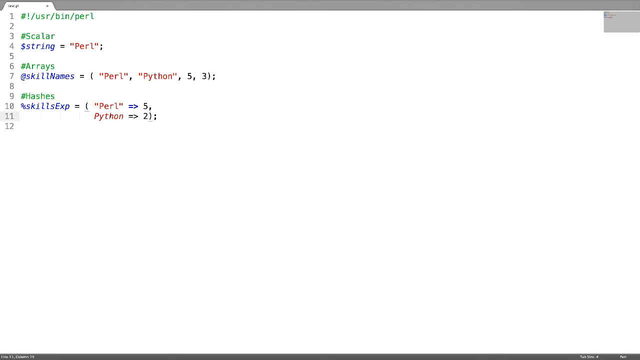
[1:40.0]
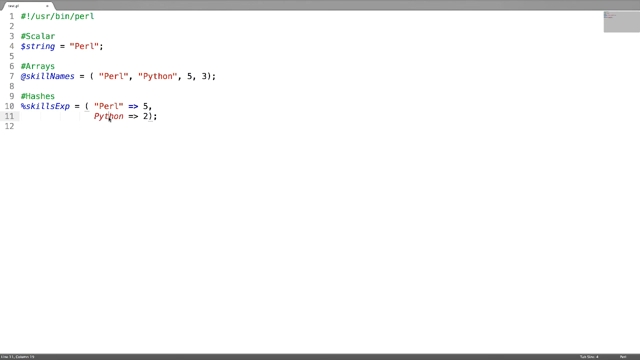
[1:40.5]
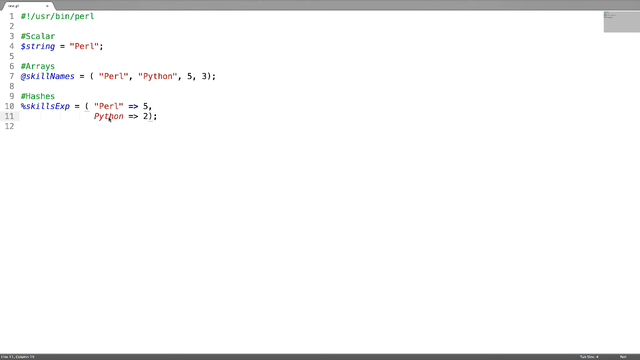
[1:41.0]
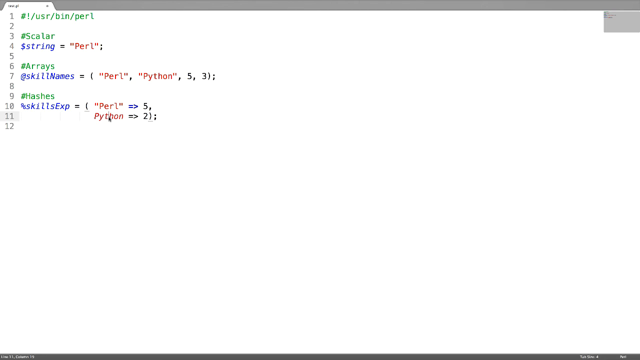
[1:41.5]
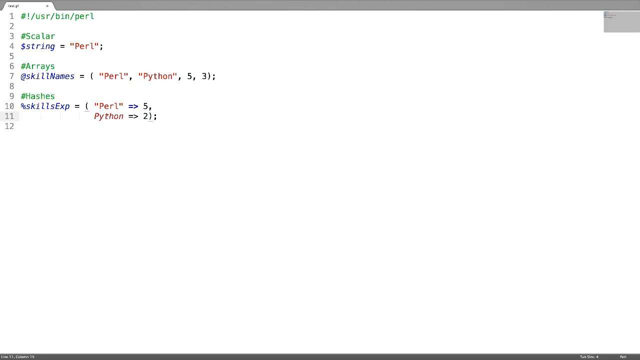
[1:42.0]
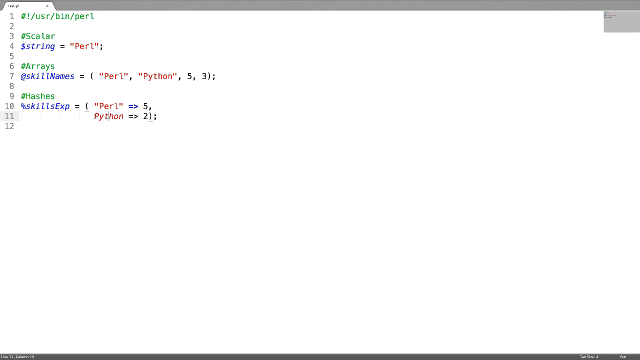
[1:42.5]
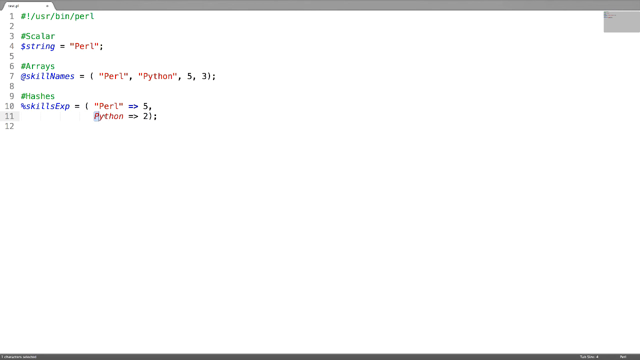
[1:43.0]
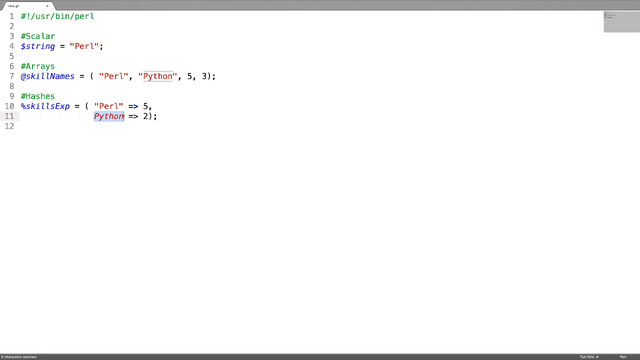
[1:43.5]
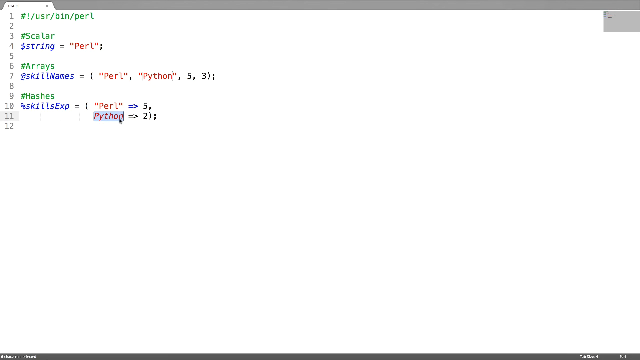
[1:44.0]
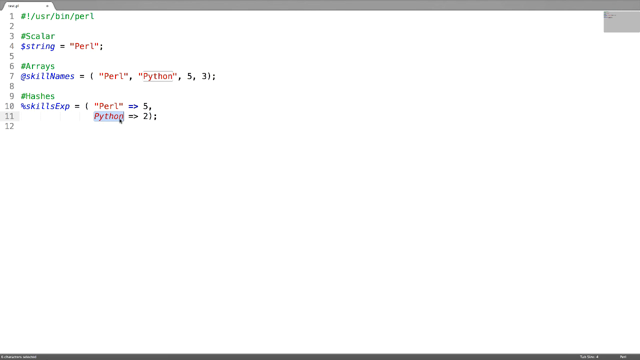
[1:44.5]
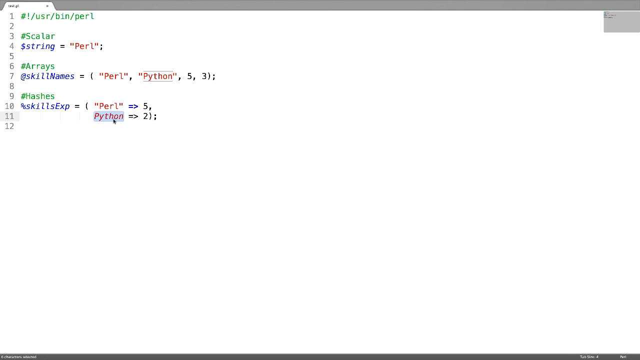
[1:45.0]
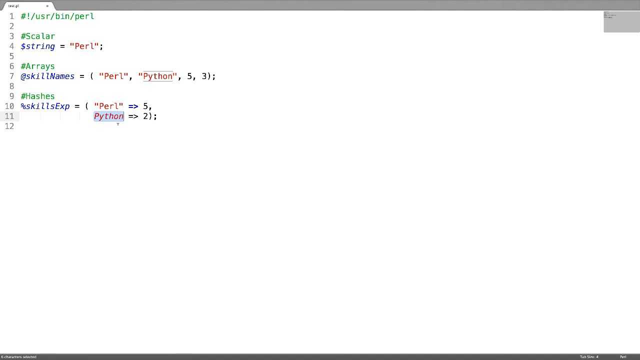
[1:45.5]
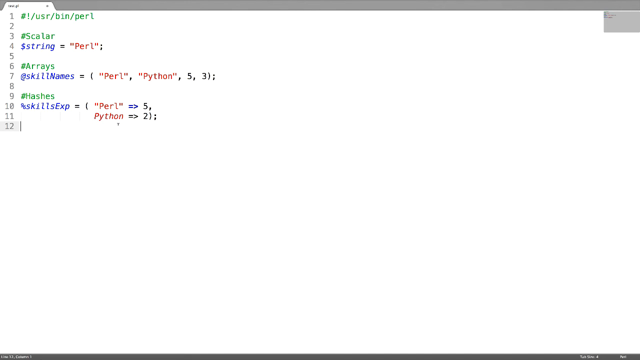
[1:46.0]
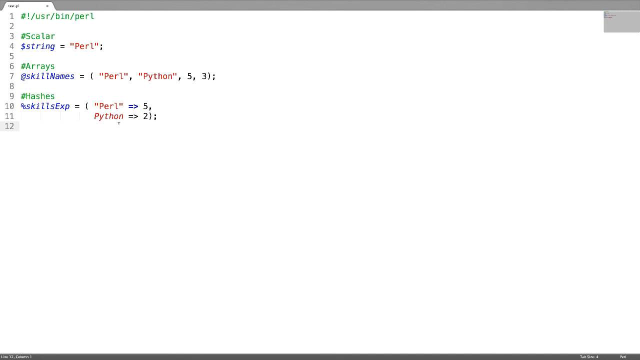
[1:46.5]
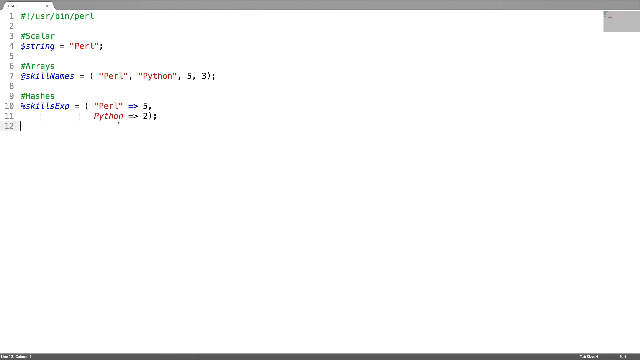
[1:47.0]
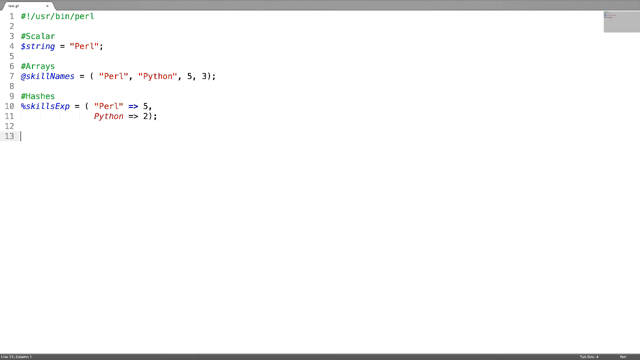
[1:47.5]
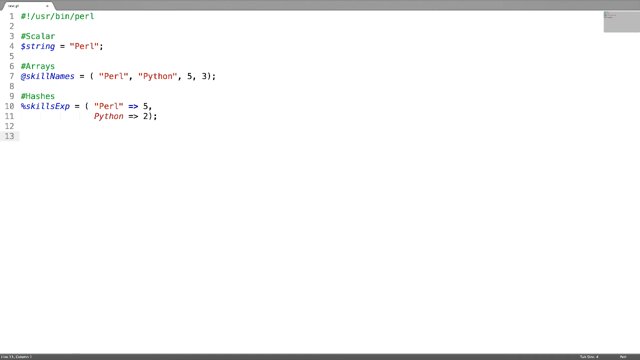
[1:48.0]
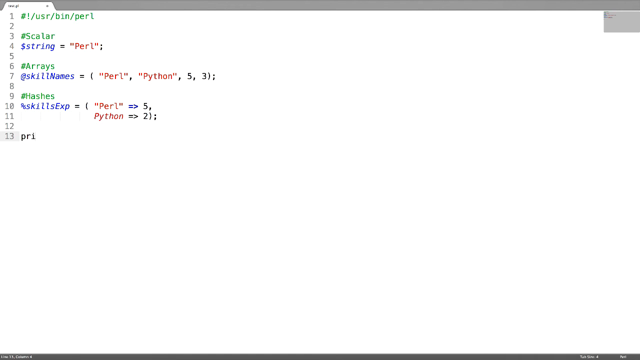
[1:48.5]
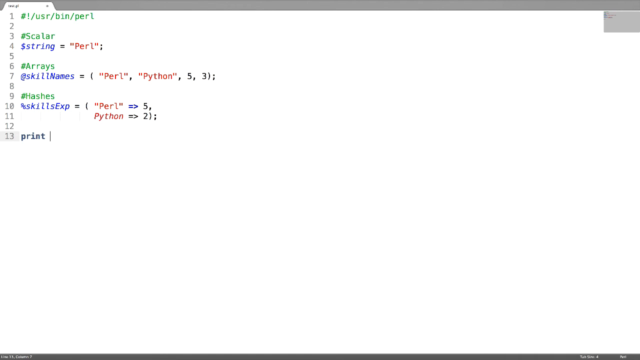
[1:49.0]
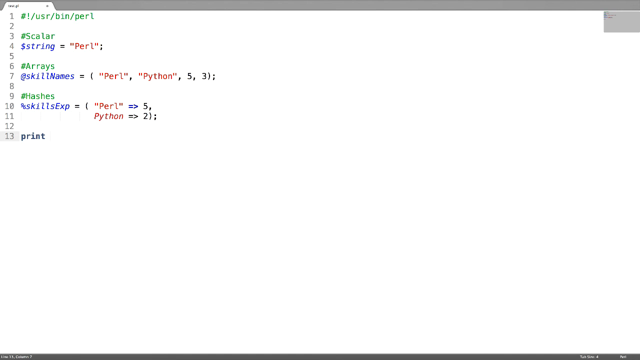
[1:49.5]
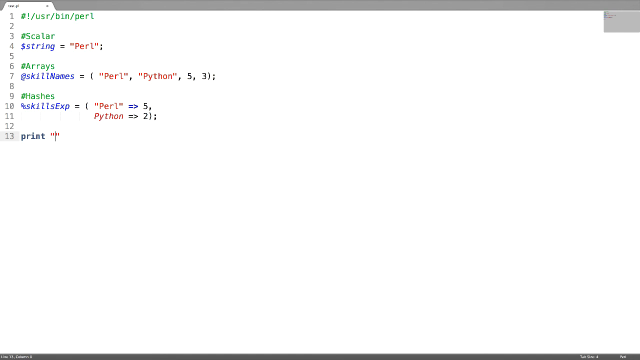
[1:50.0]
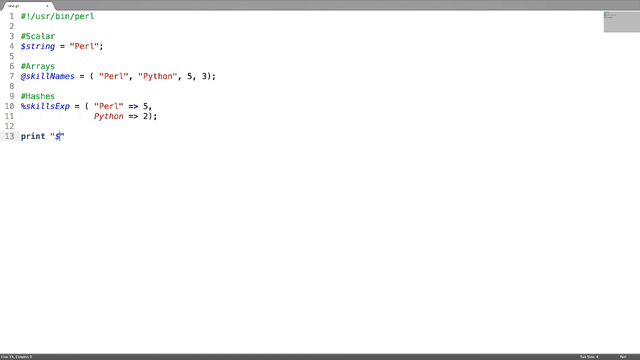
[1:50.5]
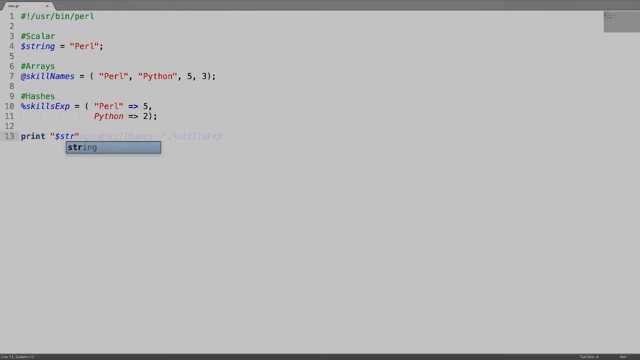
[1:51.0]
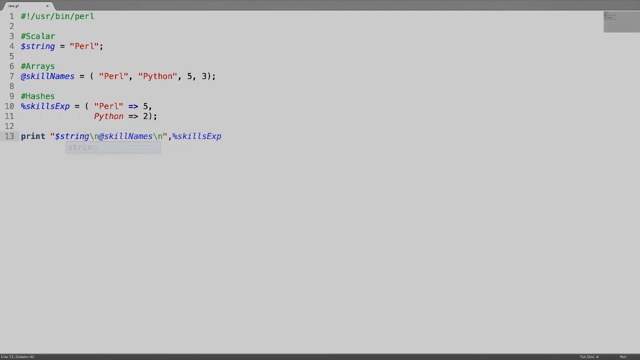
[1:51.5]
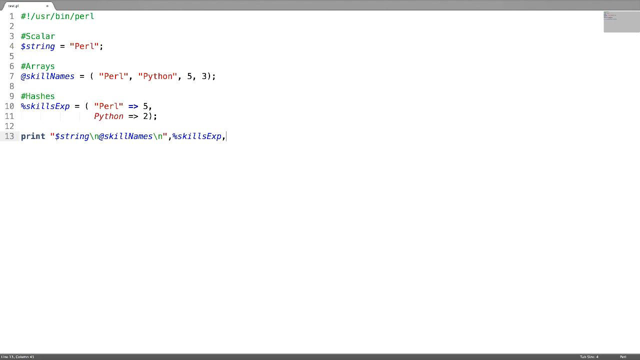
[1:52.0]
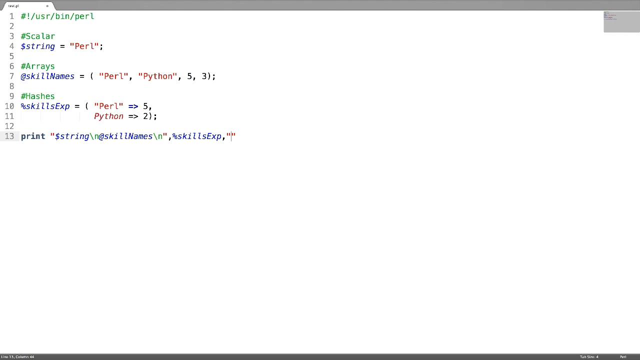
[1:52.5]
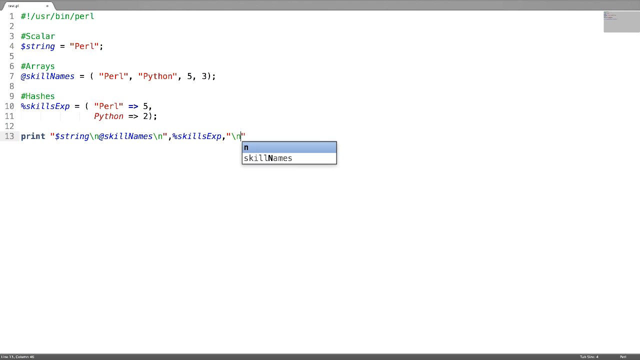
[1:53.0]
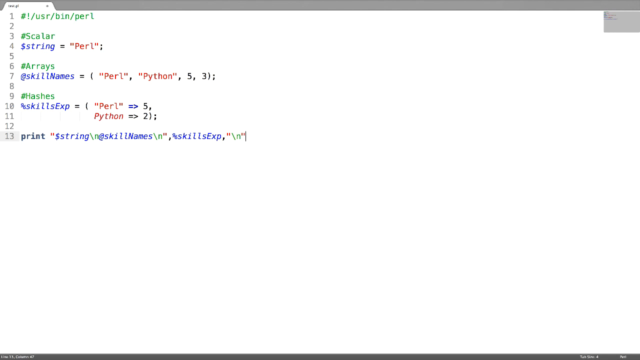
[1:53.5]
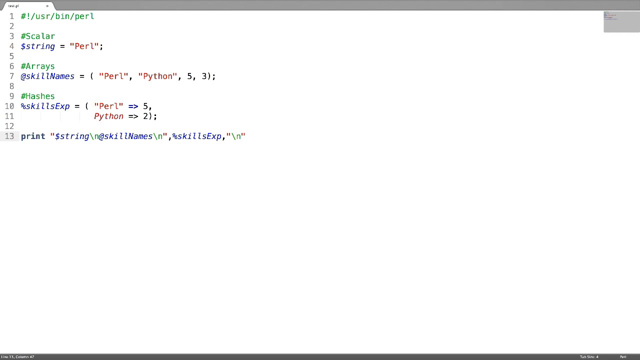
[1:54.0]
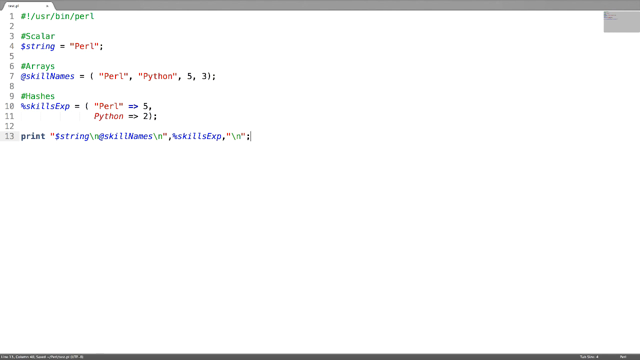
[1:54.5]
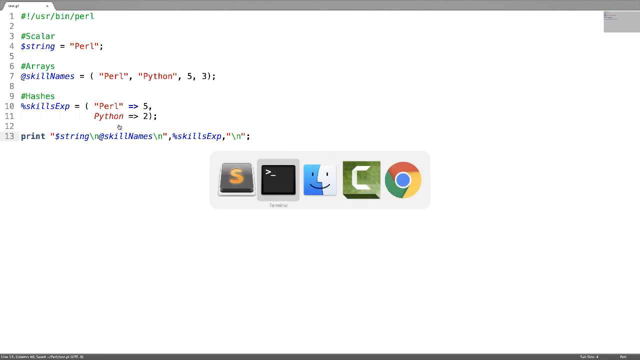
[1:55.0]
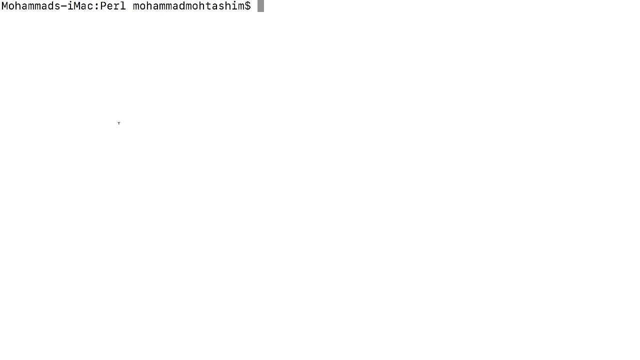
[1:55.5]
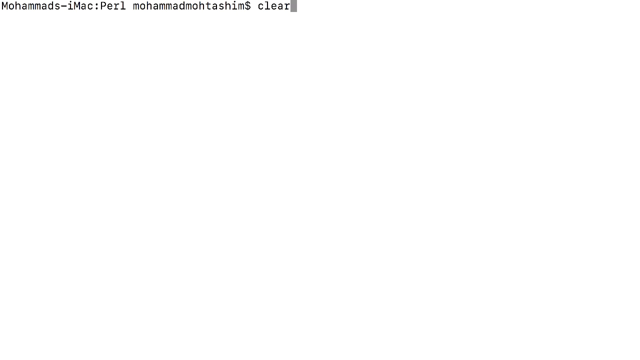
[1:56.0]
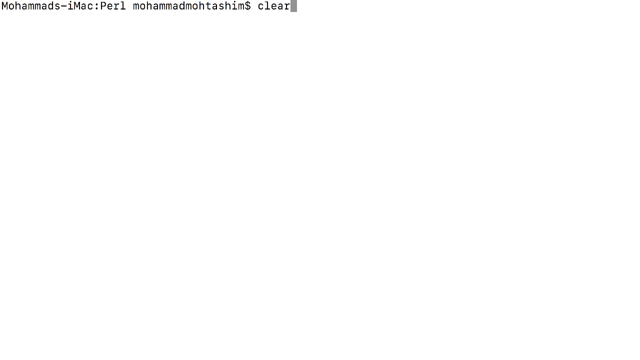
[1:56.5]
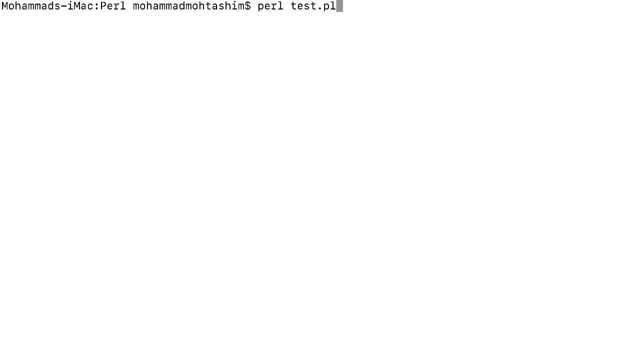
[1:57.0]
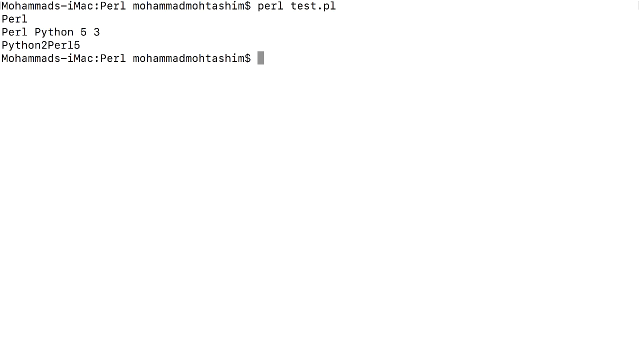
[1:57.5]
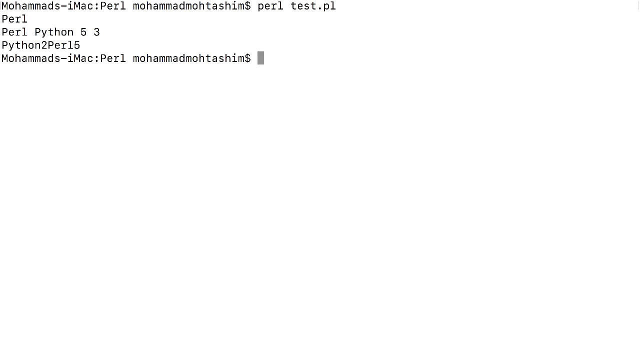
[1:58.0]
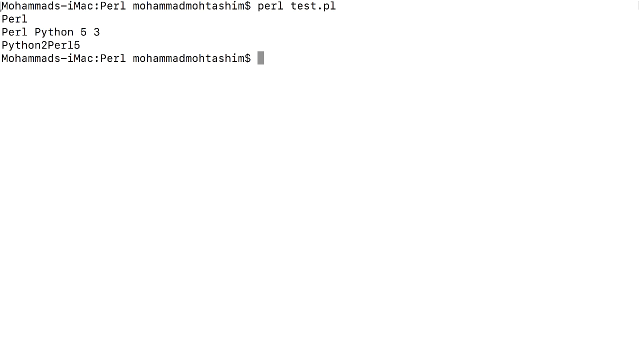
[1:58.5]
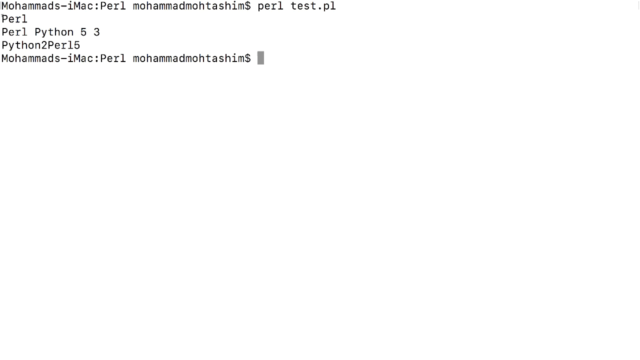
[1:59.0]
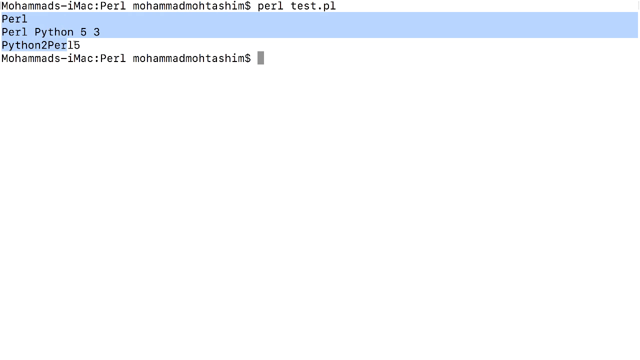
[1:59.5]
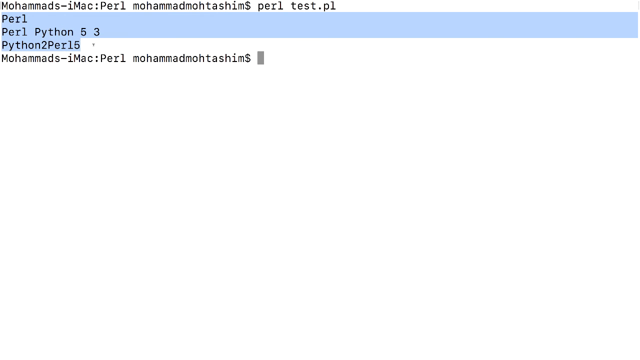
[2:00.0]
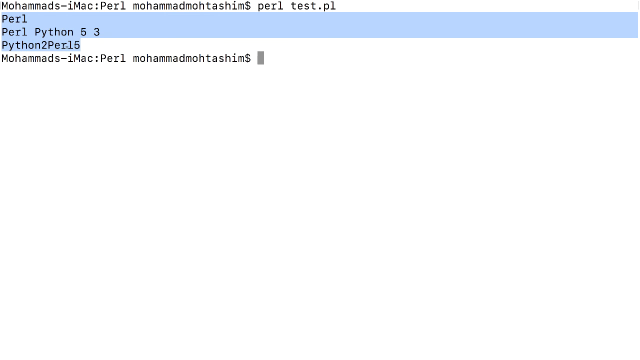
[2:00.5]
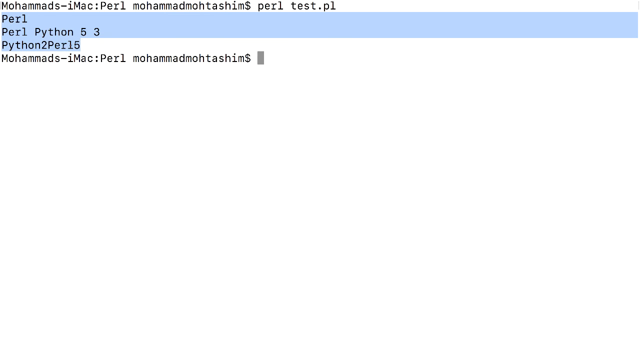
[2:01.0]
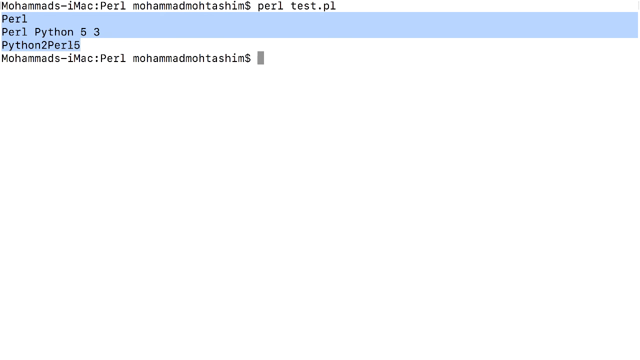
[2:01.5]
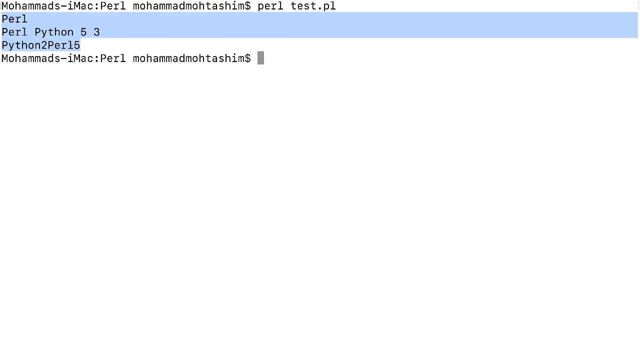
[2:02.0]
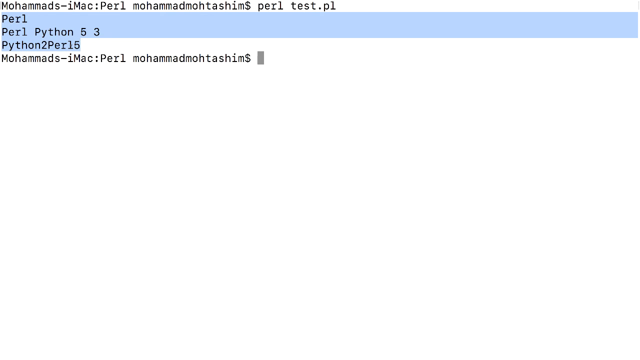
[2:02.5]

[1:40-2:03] Line 13 is added. Muhammad copies and highlights everything on his MacBook. The code shows the scalar as strings, arrays with a scale's name, and hashes with skills x. In the scalar, peril is in red; in arrays, peril is accompanied by python, five and three; and in hashes, peril is in red with five and two. In the second part, python is copied, lines 12 and 13 are added, and print is entered along with the percentage sign.